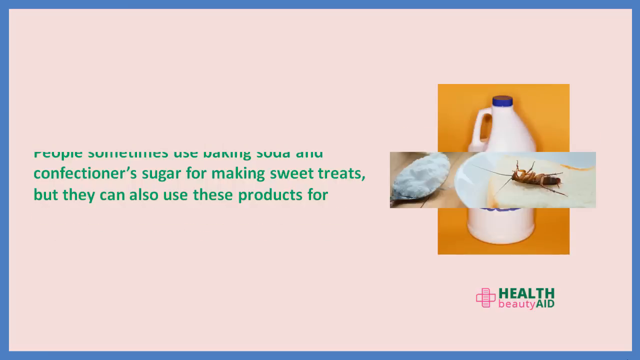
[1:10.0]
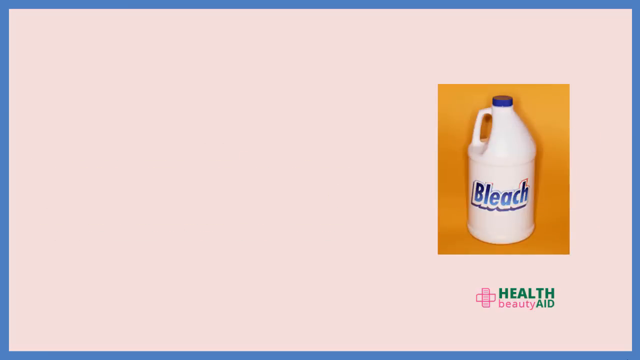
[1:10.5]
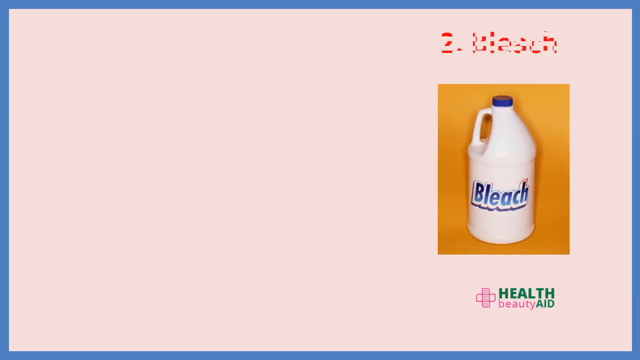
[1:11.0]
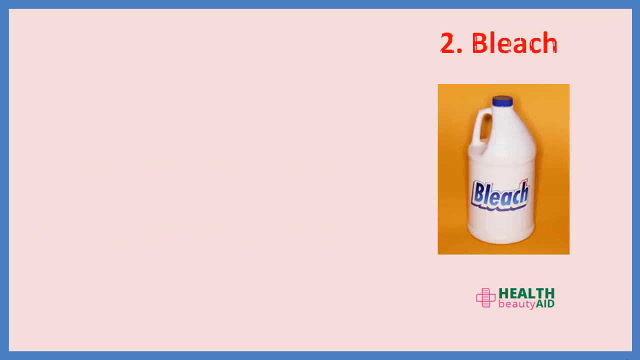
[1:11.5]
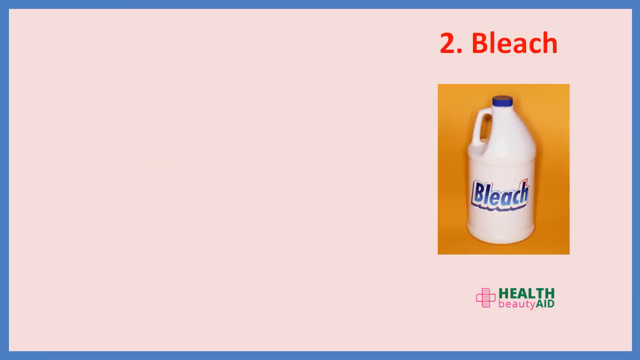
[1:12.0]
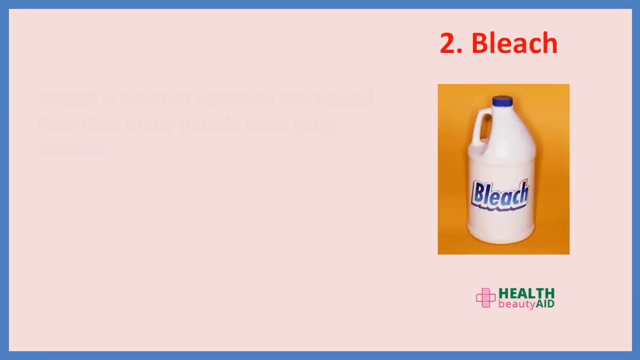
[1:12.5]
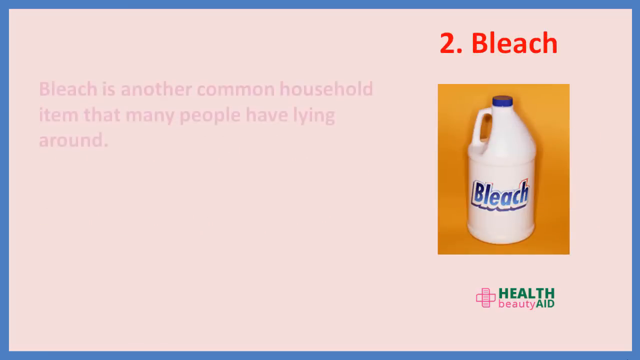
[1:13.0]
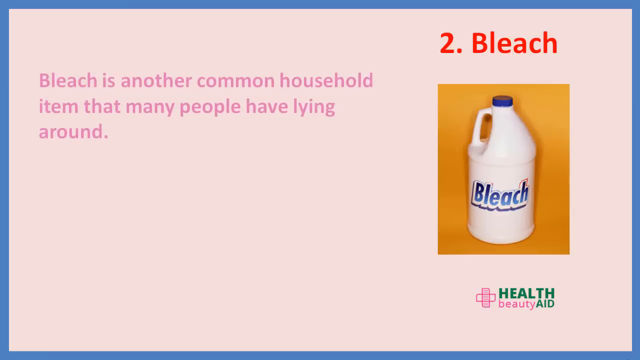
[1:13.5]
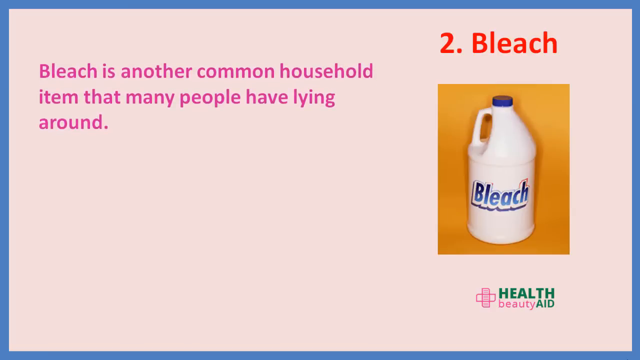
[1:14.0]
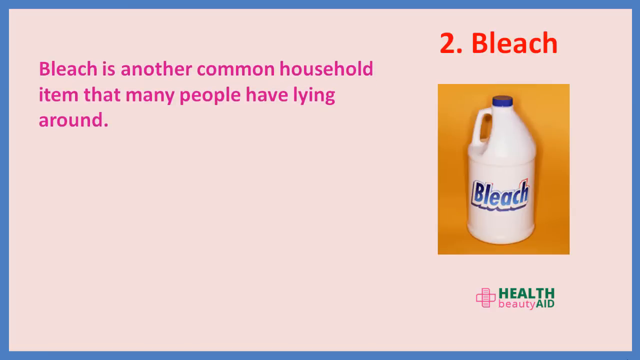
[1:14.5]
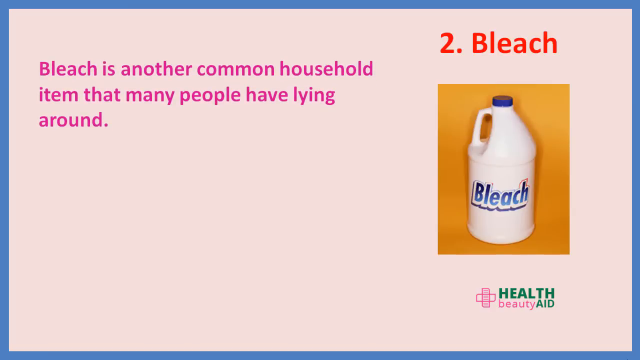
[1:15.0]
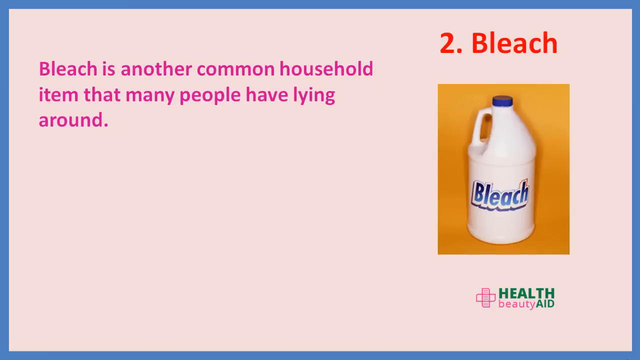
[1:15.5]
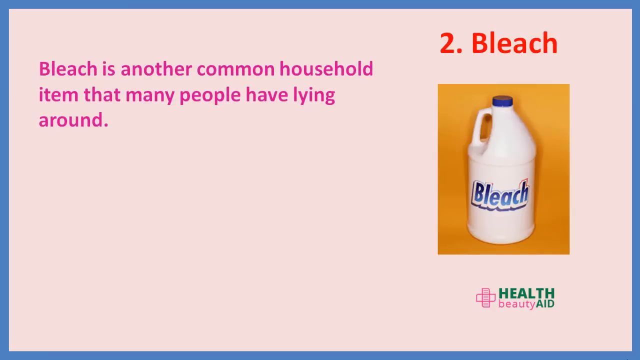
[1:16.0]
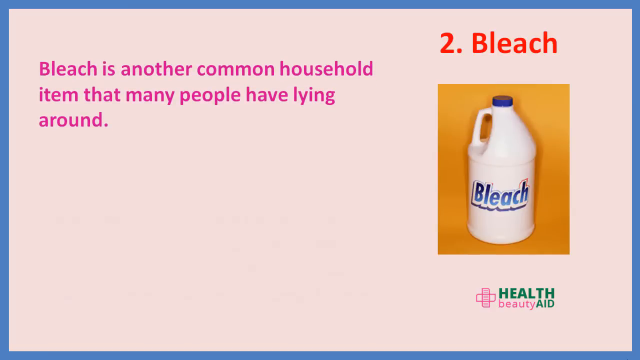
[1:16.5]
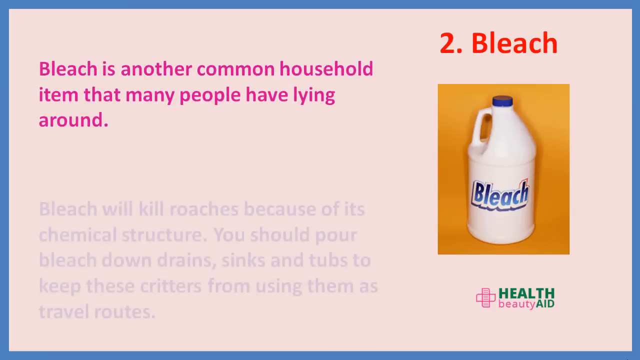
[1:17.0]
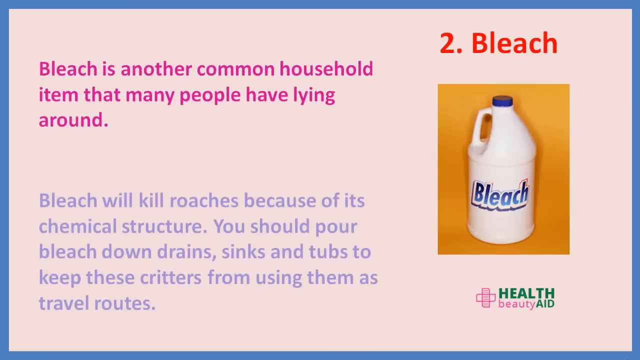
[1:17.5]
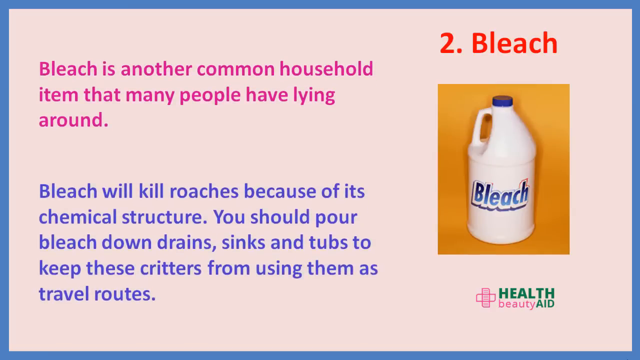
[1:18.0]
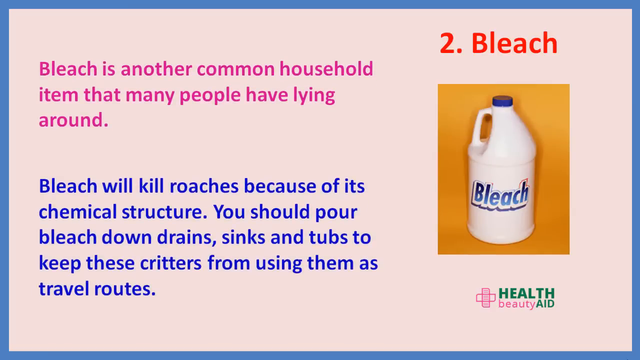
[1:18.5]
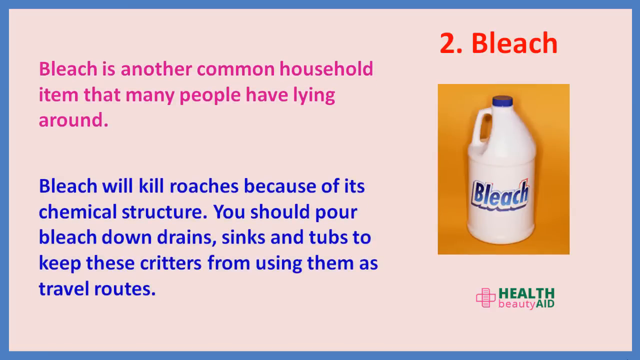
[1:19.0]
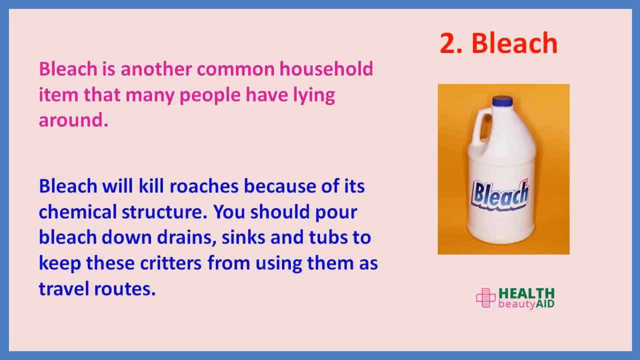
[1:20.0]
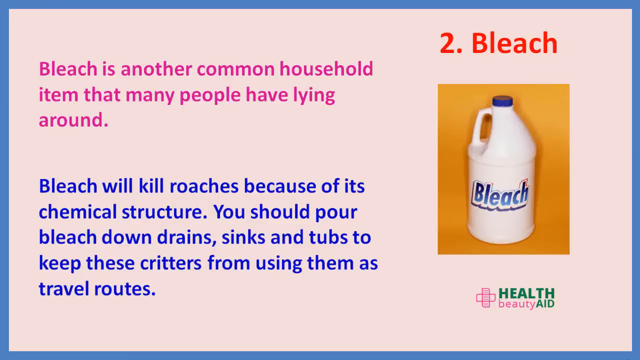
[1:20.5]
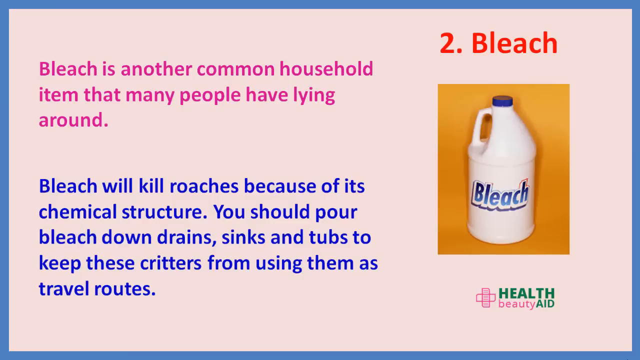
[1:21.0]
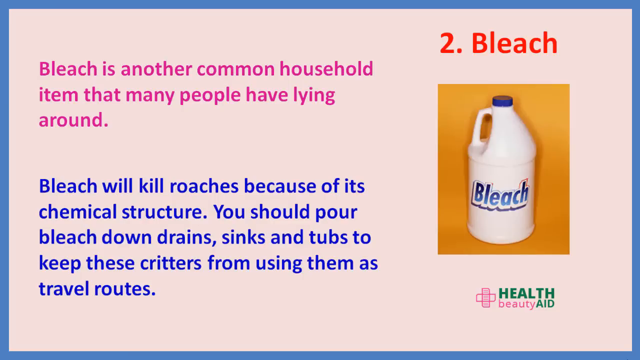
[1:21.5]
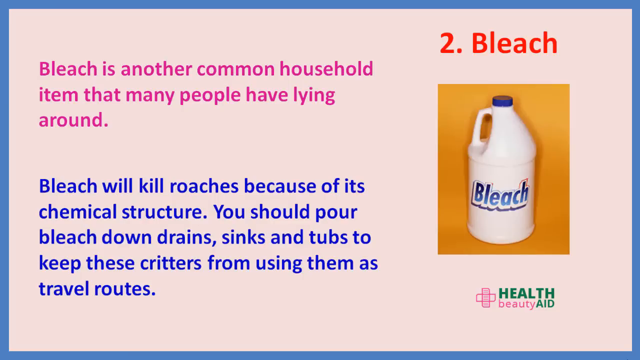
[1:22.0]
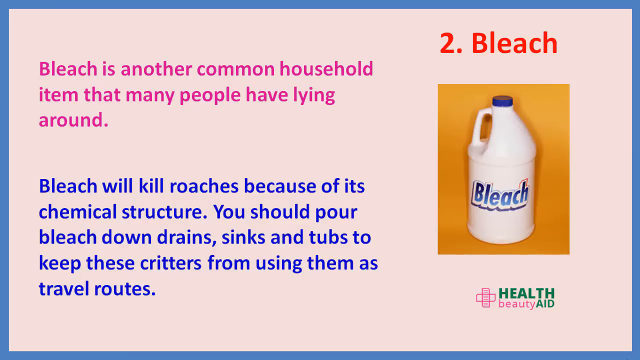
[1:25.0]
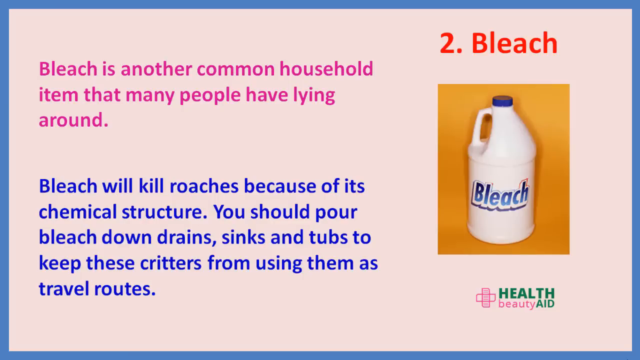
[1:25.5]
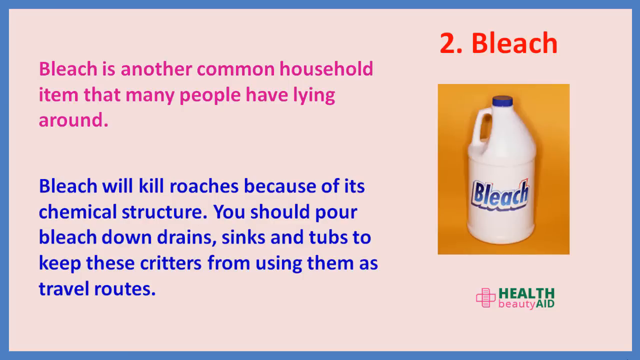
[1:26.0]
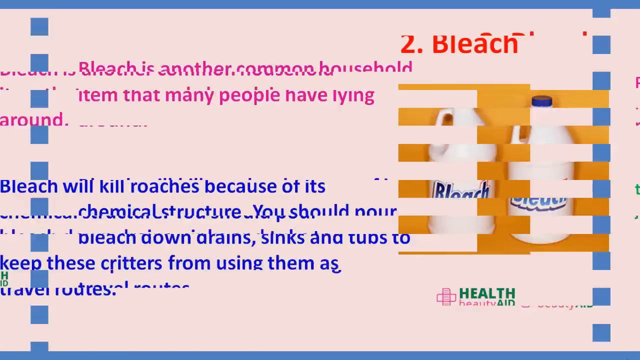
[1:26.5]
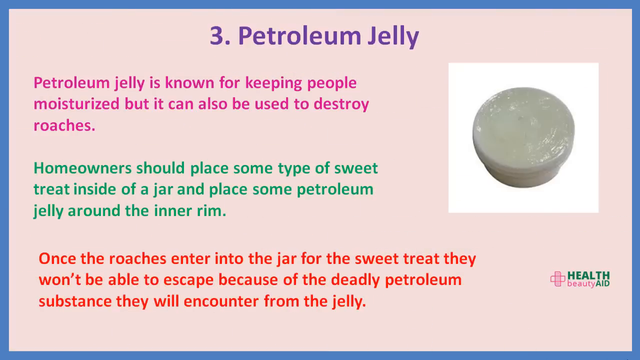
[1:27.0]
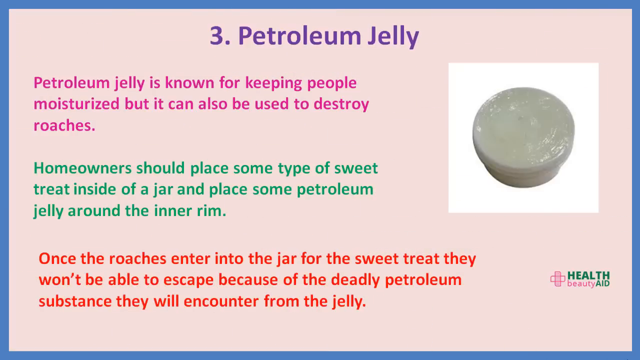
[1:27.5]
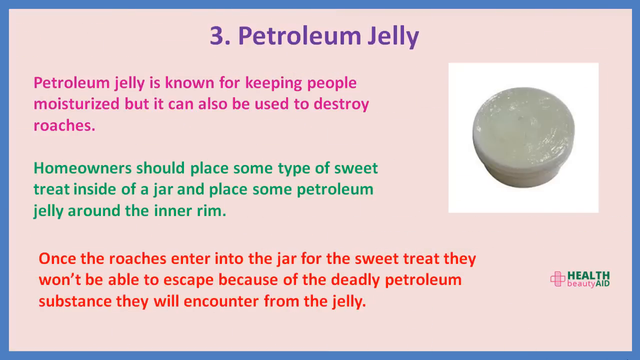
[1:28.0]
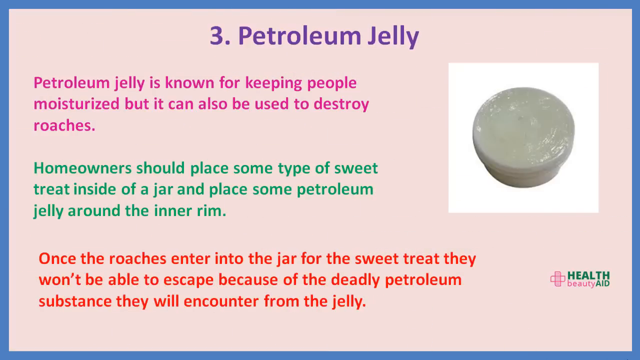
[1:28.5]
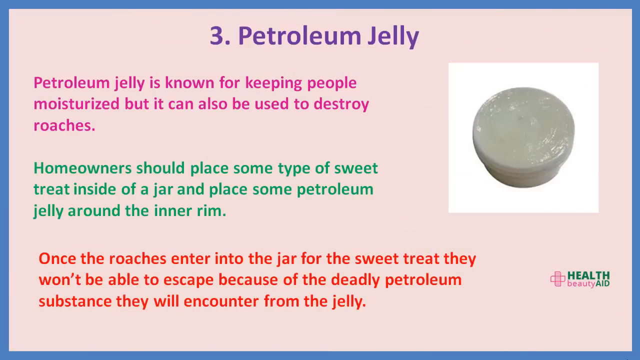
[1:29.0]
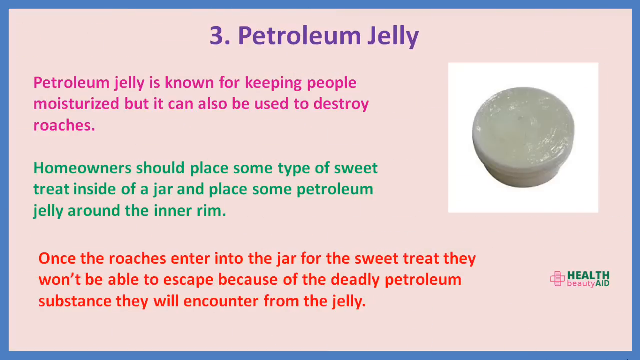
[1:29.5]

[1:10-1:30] A framed background has a pink center. Up top on the right side, orange lettering says "two bleach." On the left side, purple lettering reads "bleach as another common household item that many people have lying around." Blue lettering below says "bleach will kill roaches because of its chemical structure. You can pour bleach down drains, sinks, and tubs to keep these critters from using them as travel routes." On the right side, against an orange background, a white plastic bottle with a blue cap is in the center, with blue lettering on the front that says "bleach." Below, green lettering says "health," pink lettering below that says "beauty," and green lettering to the right reads "aid." To the left of these letters is a pink cross that looks to be a band-aid. The next image has a blue frame and a pink background. Purple lettering at the top reads "three petroleum jelly." Below, in a lighter shade of purple, it says "petroleum jelly is known for keeping people moisturized. It can also be used to destroy roaches." Green lettering below reads "homeowners should place some type of sweet gel treat inside of a jar and place some petroleum jelly around the inner rim." Orange lettering below says "once the roaches enter into the jar for the sweet treat, they won't be able to escape because of the deadly petroleum substance they will encounter from the jelly." On the right side is a white square with a gray rounded piece. Below are the green lettering "health," then "beauty," and to the right the green "aid," along with a green cross that looks to be a band-aid.